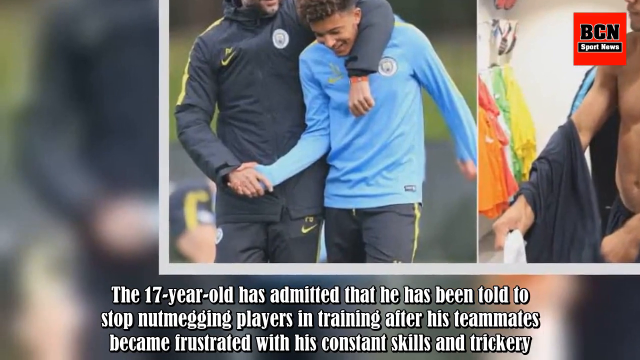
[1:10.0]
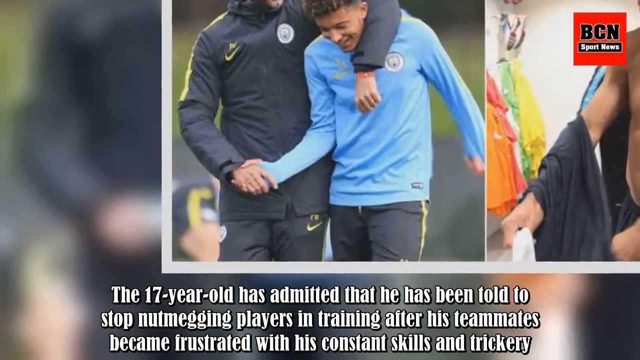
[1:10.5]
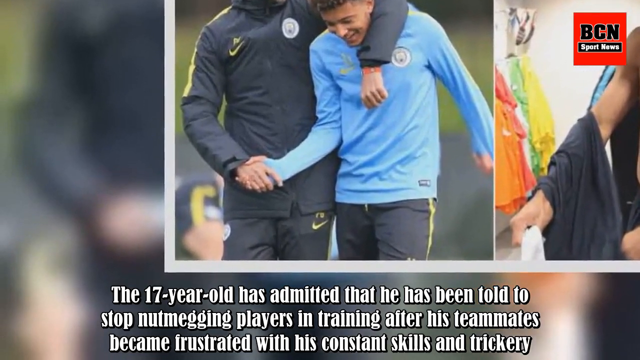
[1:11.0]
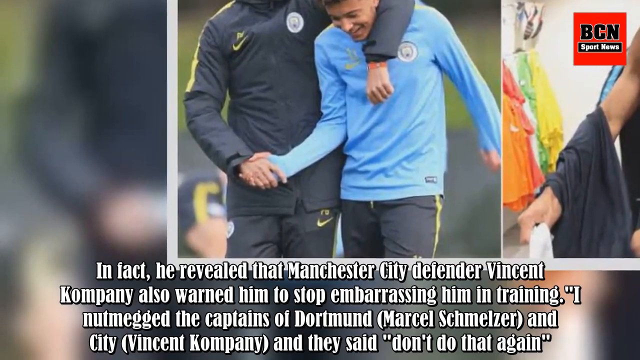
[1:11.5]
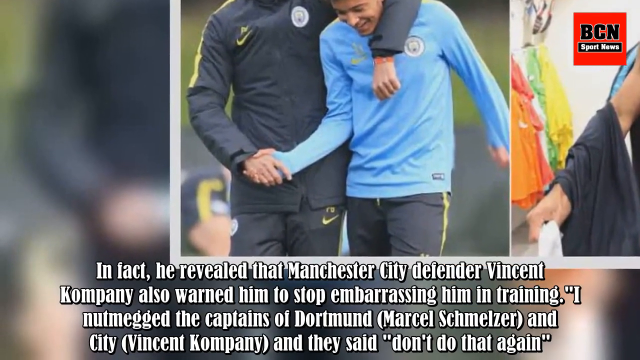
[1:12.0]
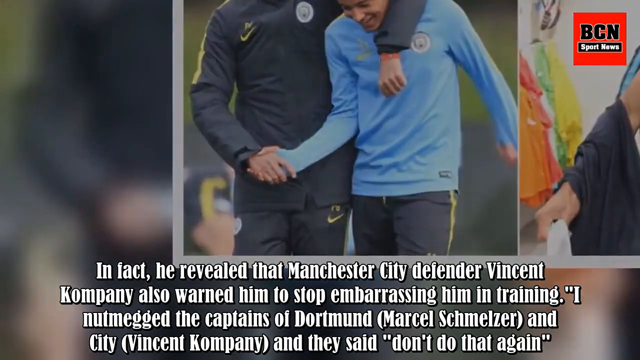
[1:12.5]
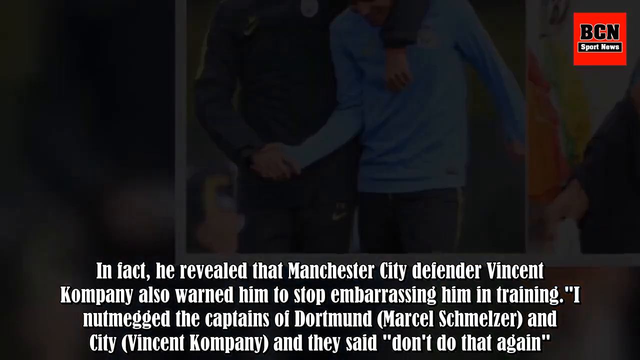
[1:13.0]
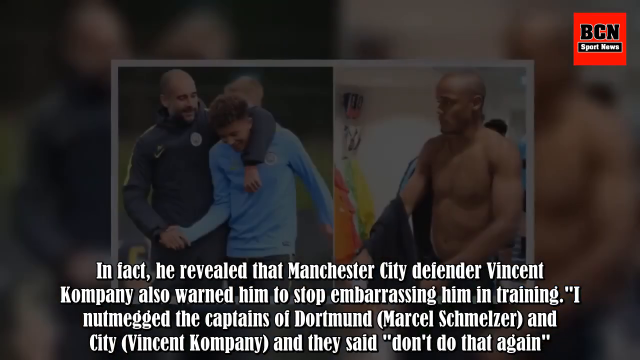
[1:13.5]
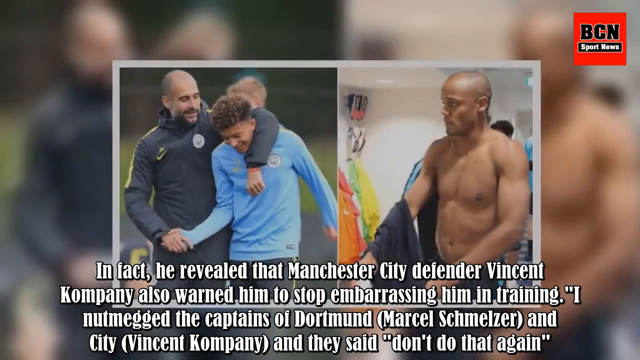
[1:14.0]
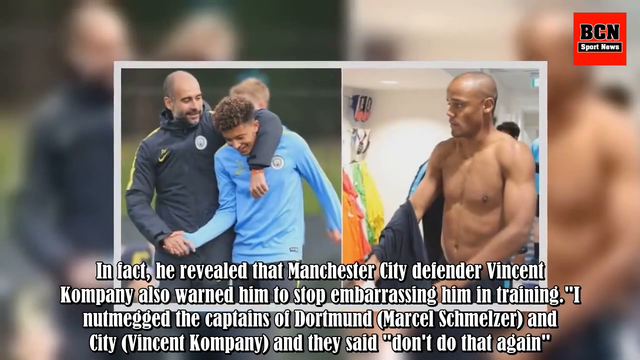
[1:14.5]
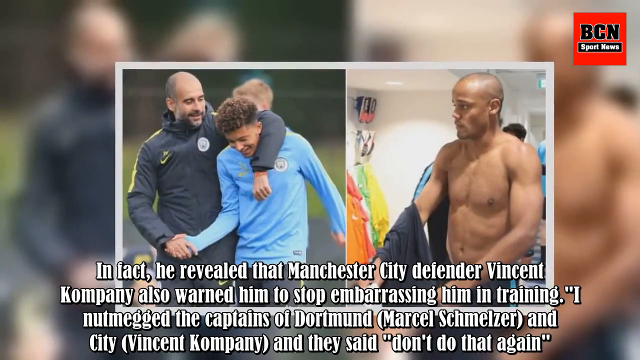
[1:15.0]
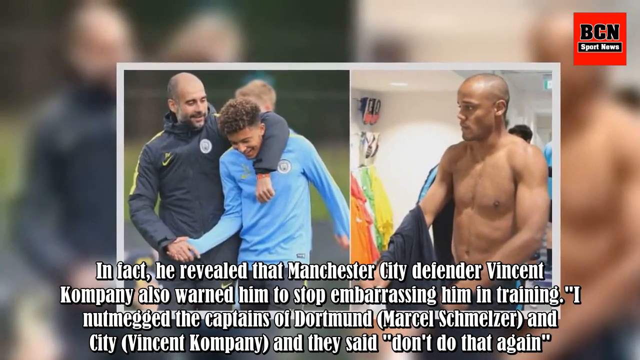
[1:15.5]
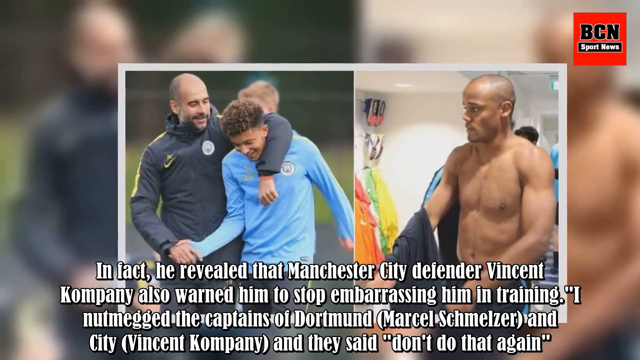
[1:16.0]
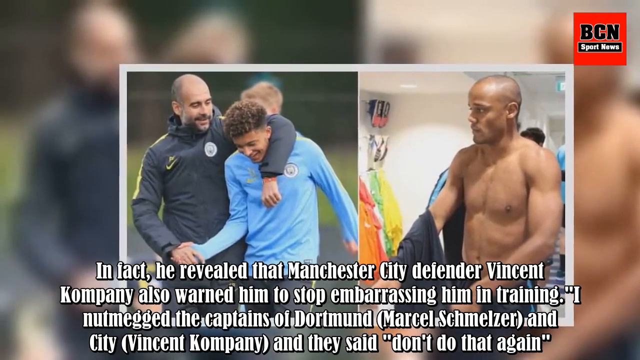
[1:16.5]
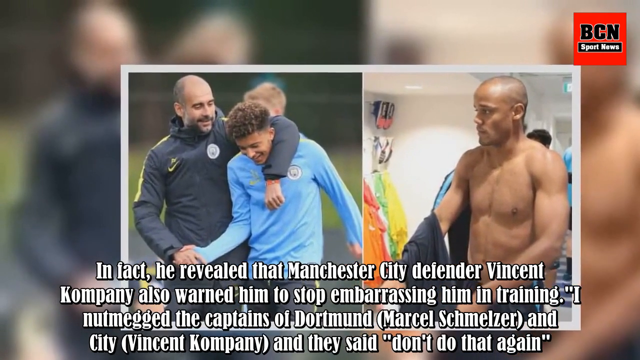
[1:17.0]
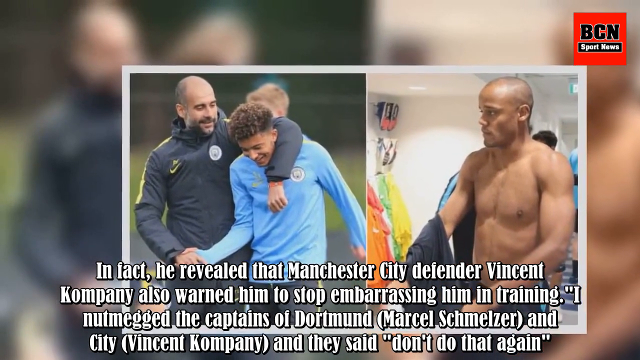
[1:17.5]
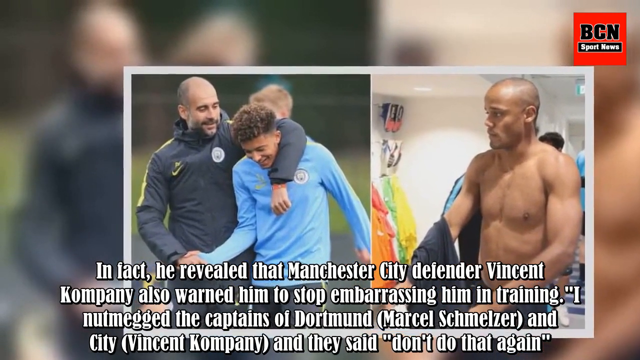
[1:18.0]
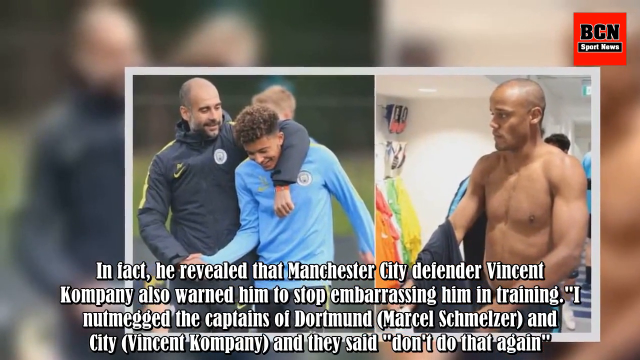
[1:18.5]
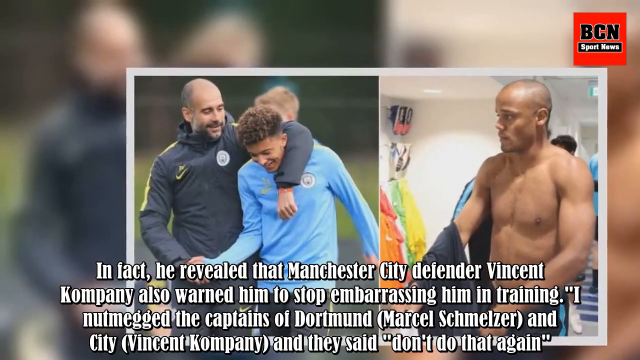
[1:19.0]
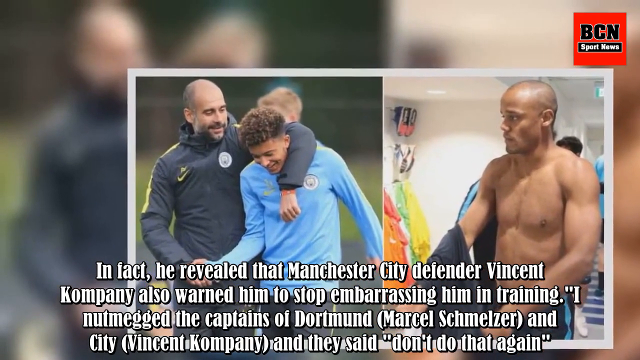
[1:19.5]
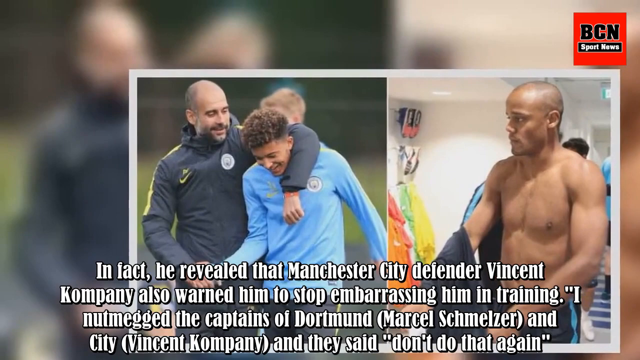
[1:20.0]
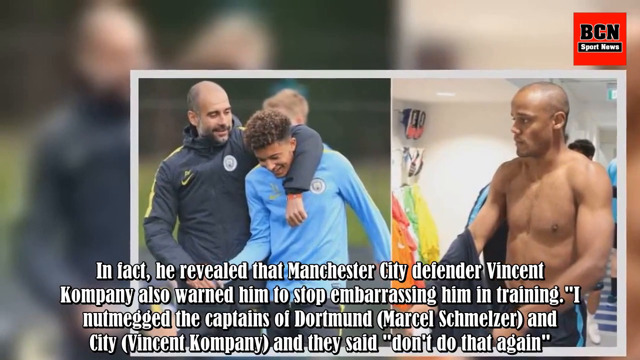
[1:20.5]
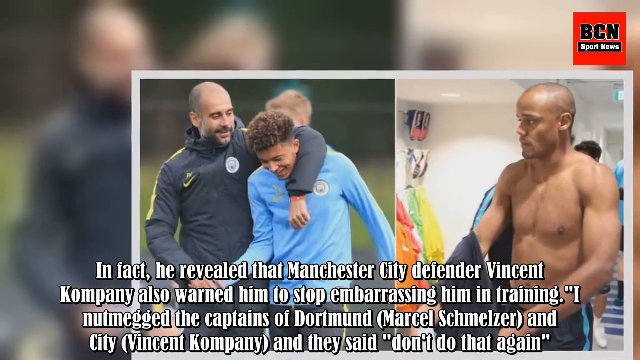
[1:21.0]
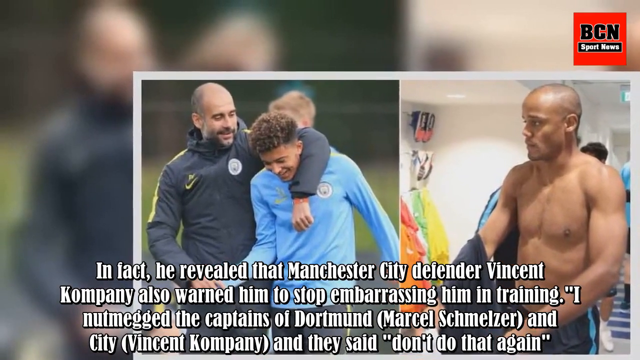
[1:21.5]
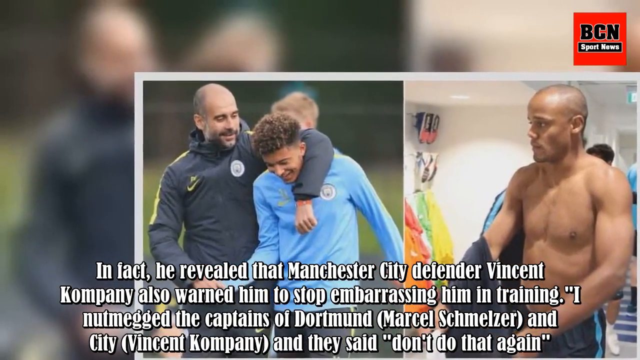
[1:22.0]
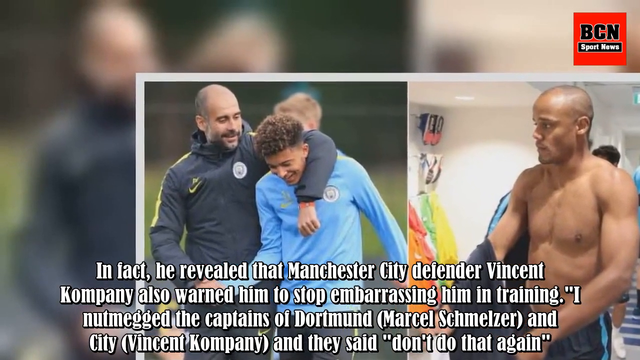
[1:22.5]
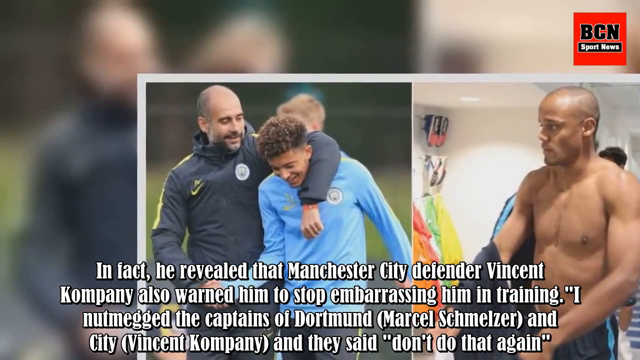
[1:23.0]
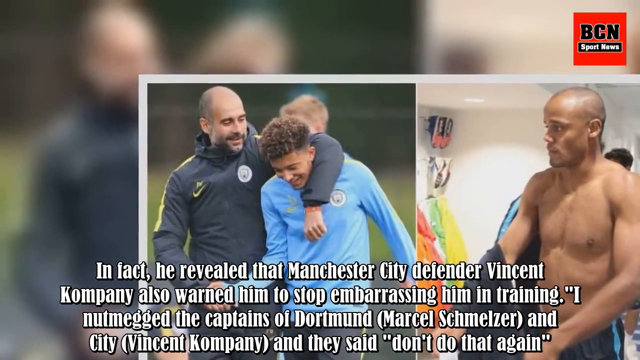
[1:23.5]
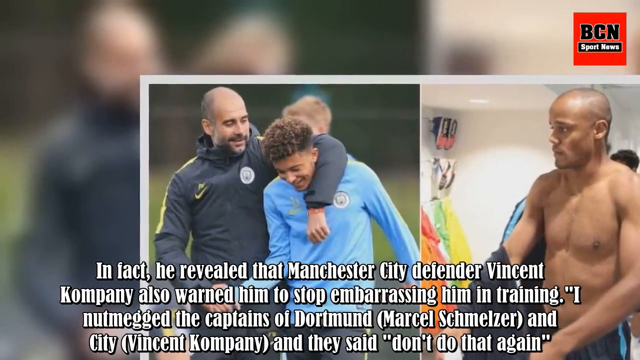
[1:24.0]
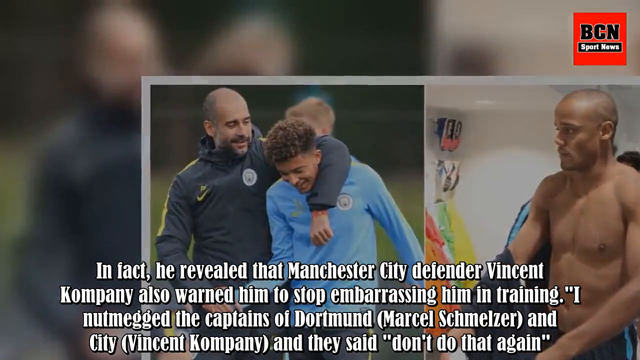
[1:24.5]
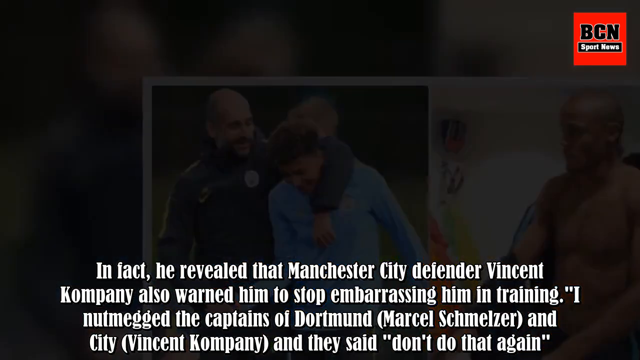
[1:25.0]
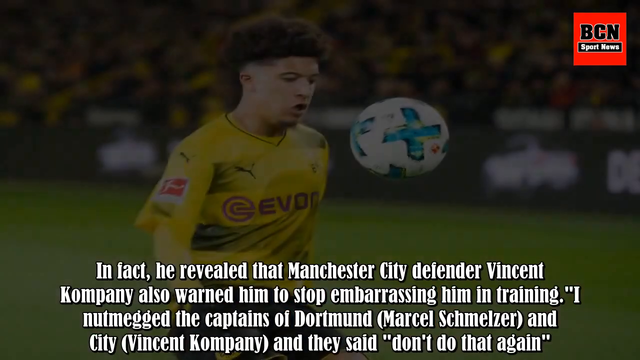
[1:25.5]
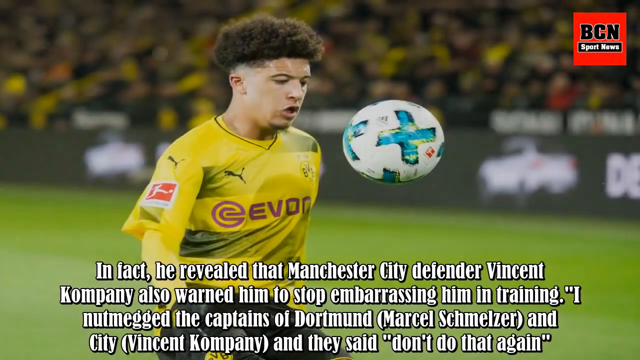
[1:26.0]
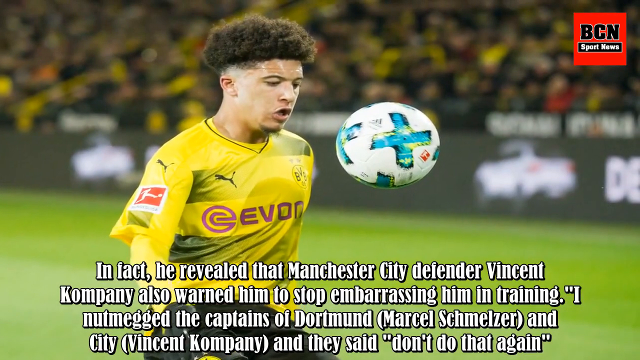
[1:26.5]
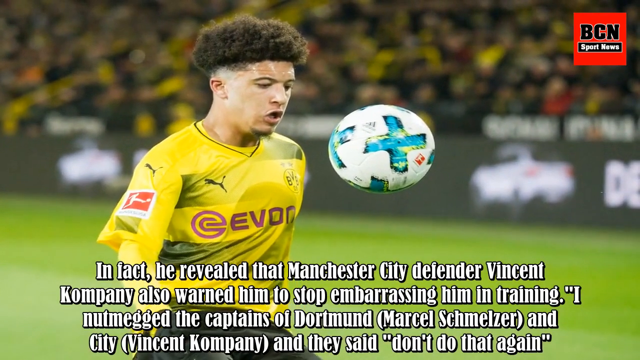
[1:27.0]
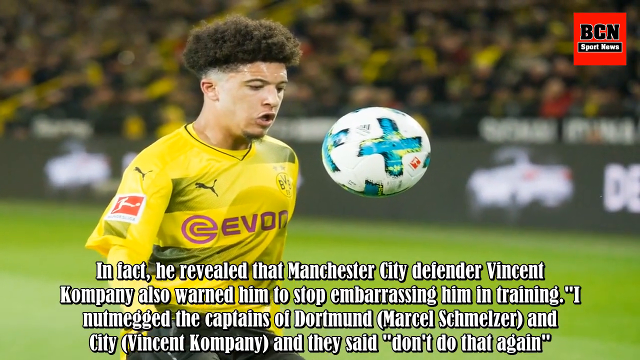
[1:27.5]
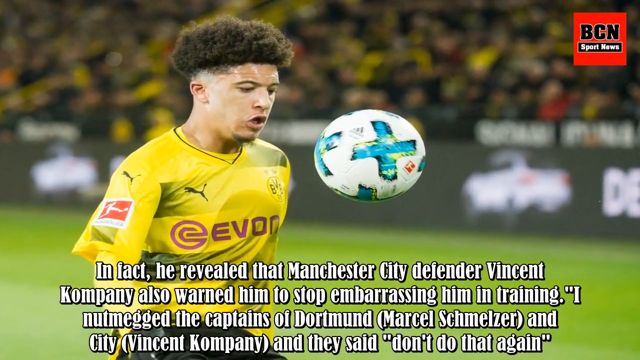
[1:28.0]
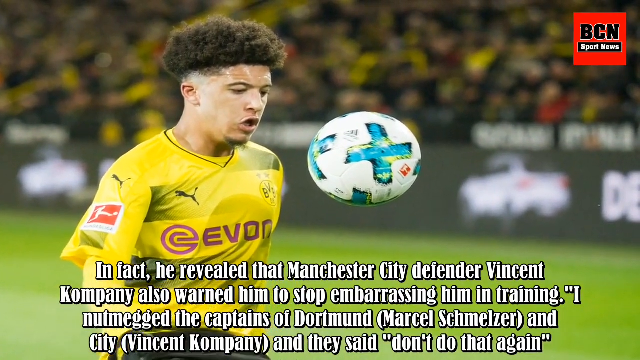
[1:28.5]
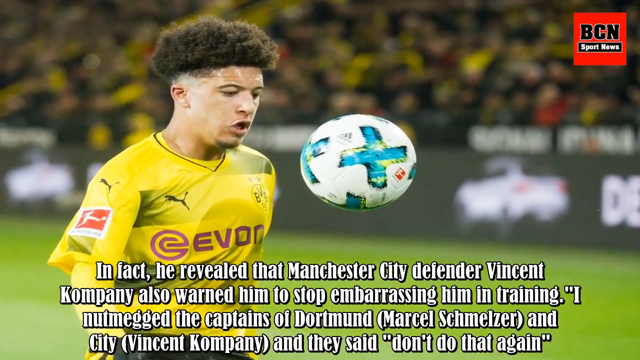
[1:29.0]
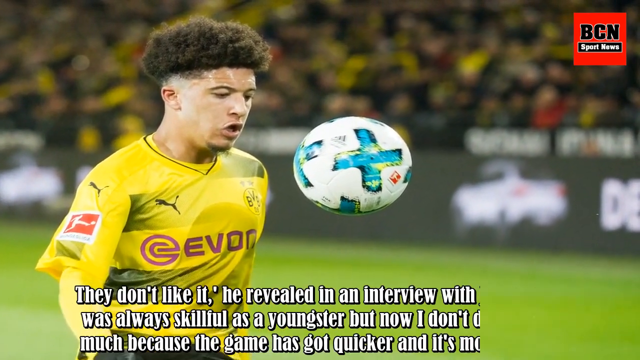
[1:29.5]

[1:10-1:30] A picture shows a soccer player shaking hands with another person who could be a coach and looks a lot older than the player. The player wears a blue long-sleeve jersey and black pants with neon green trim. The person he is shaking hands with wears a black jacket, also with neon green trim, and black pants. The image seems to move toward the right, and next to it on the right is another image in which only a person's arm and a black shirt dangling over the wrist area are visible. White text is at the bottom of the screen. The picture fades away, and a more zoomed-out version of the same picture appears, now showing the picture on the right: a man taking off his shirt, which is dangling from his right arm.